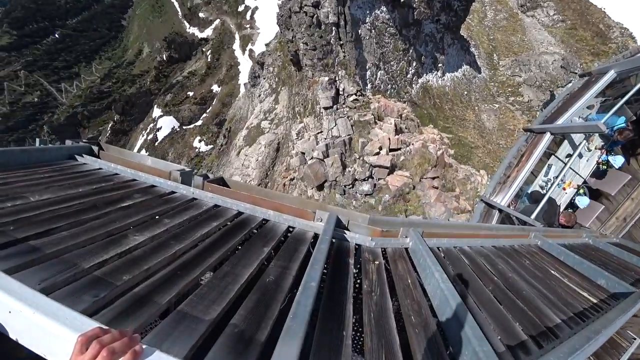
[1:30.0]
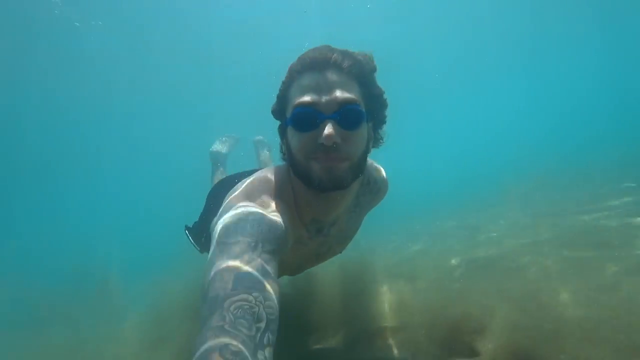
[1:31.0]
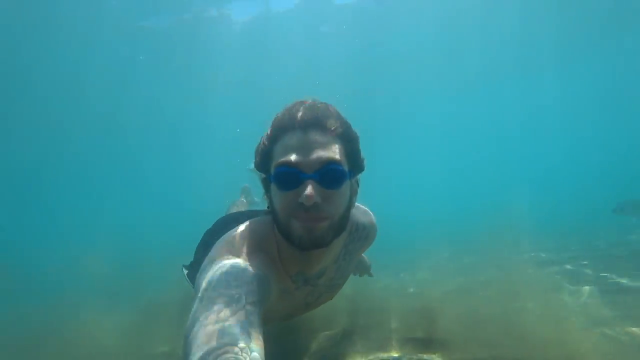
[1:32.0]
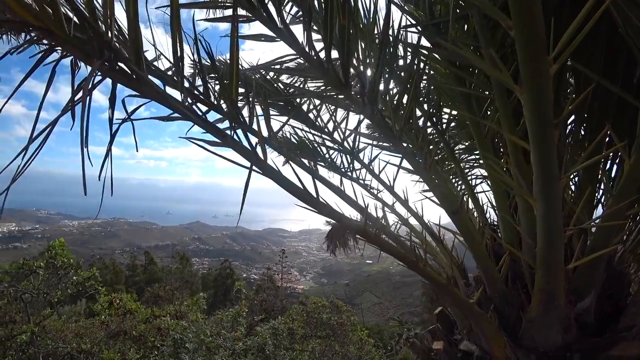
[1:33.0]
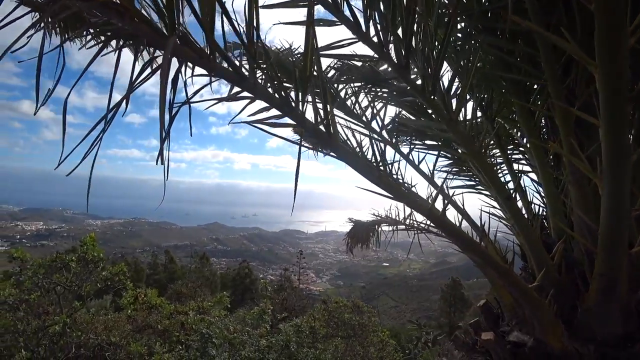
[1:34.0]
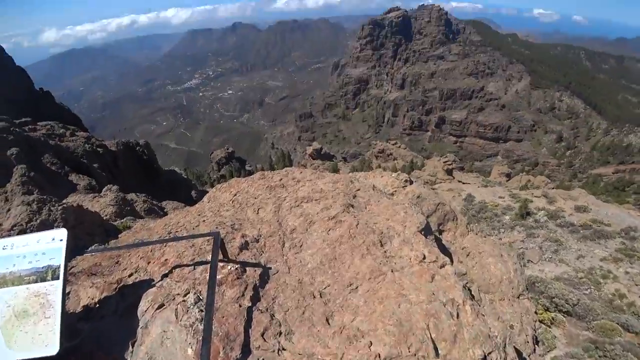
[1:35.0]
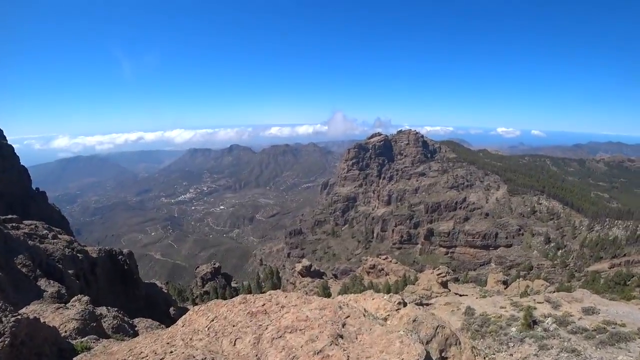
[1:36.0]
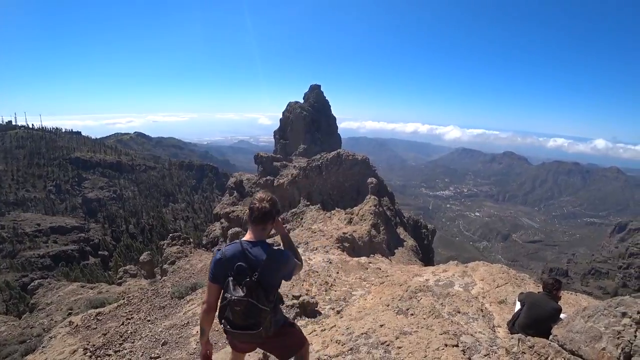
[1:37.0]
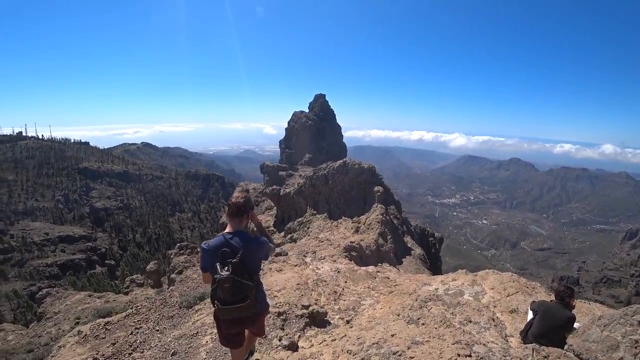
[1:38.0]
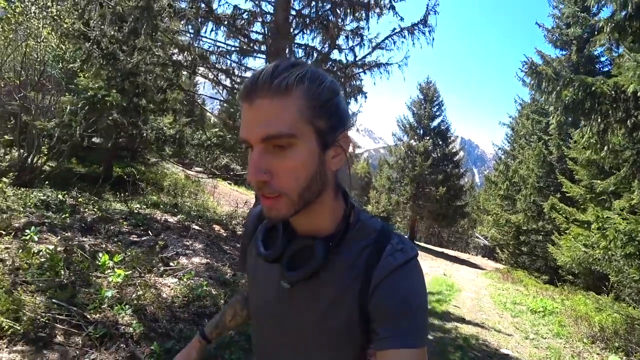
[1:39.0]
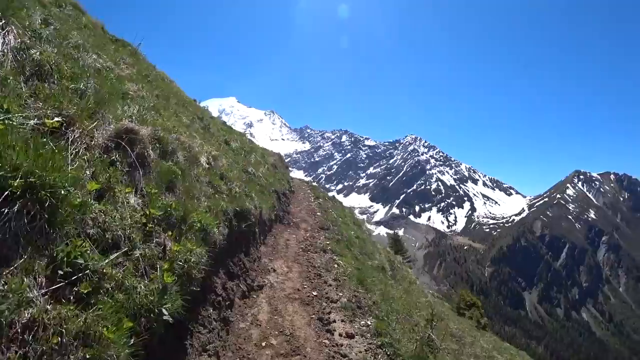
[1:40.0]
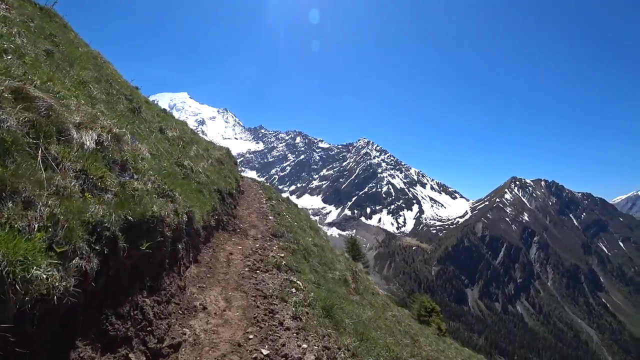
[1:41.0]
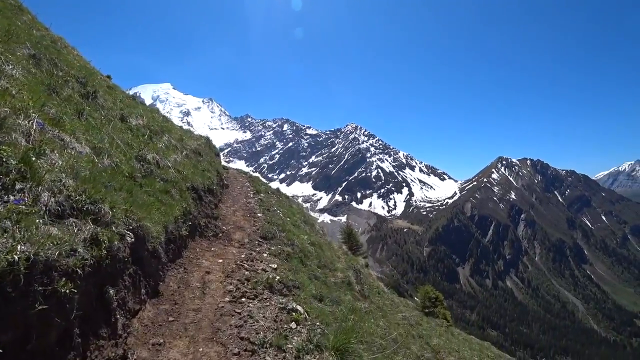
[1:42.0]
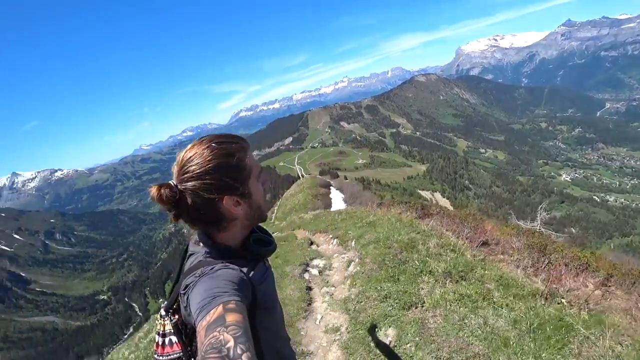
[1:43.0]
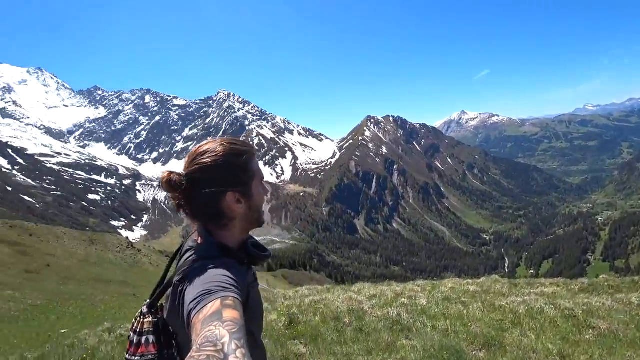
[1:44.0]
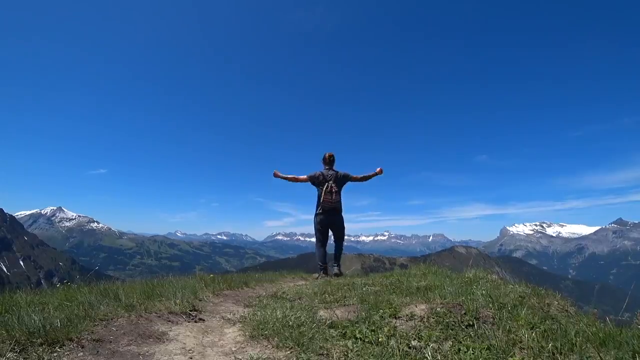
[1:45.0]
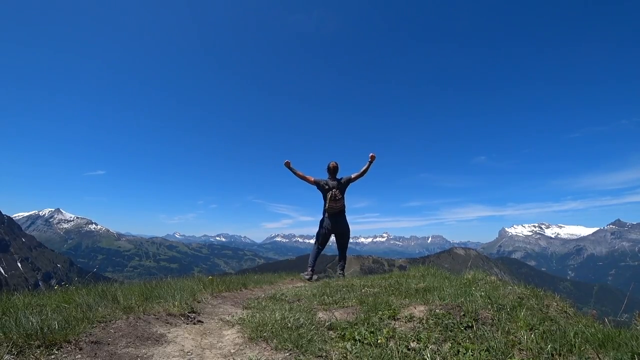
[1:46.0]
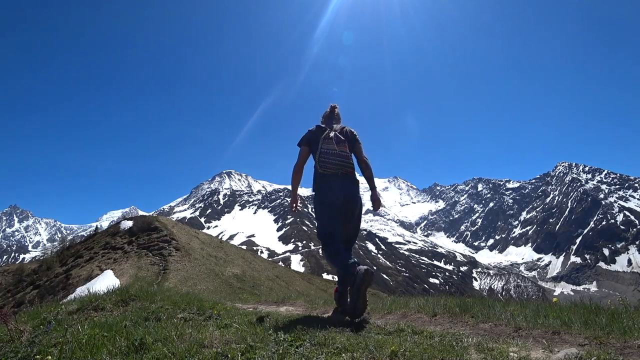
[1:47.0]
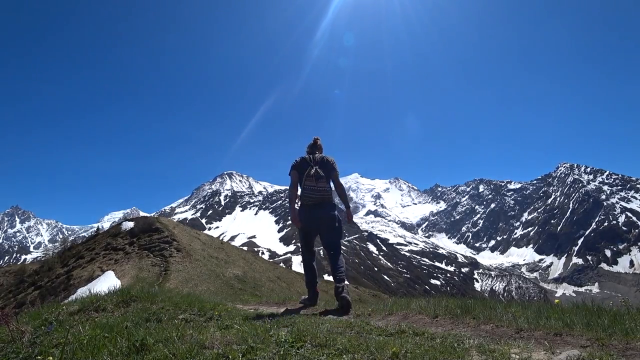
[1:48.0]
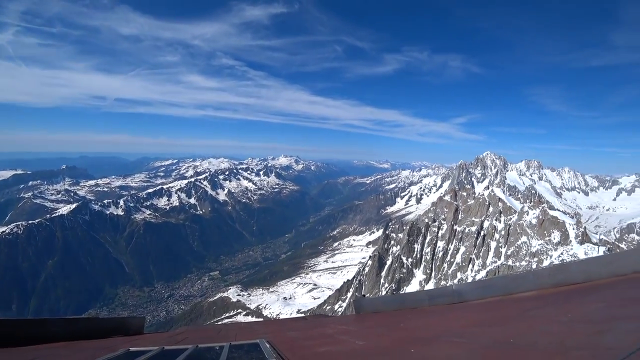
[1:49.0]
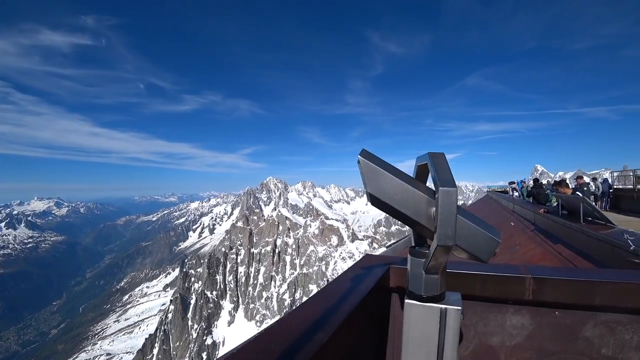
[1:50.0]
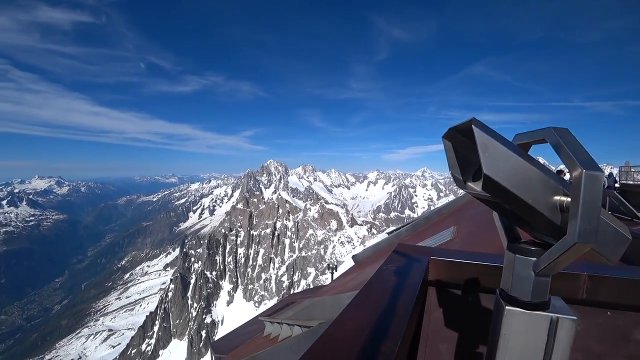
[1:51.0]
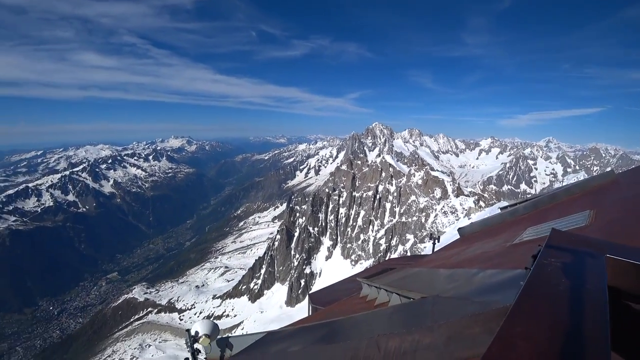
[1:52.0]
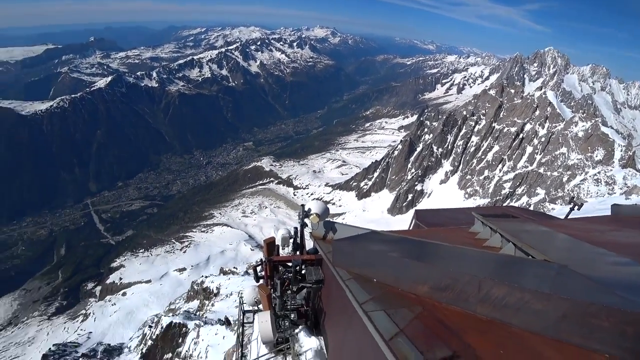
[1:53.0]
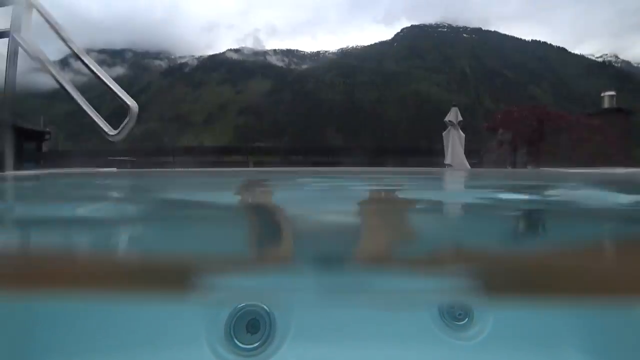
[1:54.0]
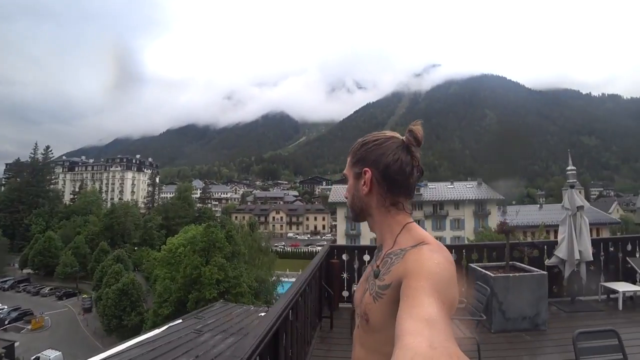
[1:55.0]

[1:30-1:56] Rocks are visible down below. A man wearing black goggles and black shorts swims underwater, with blue water all around him. Hilly terrain is in the background with a palm tree in the foreground, under a blue sky with white clouds. Another view shows rocky mountainous terrain, the rocks covered with dense dark green vegetation, and a blue sky on the horizon. A person in a black T-shirt, her hair pulled into a bun behind her head, walks ahead towards the peak of one of the cliffs. A man is seen from the side as he walks in the wilderness, followed by the view ahead as he walks forward, looking at the side of the mountain. The man appears again, his hair pulled up in a bun behind his head; he is filming himself as he walks, though the camera is not visible. Ice-covered mountain peaks are in the background. Seen from the back, the man stands up and puts both hands up in the air, clenched into fists, looking dramatic, his silhouette against the expanse of blue sky on the horizon and the land he is standing on. He continues to walk, viewed from the land. More snow-covered mountains appear, then someone's feet in a pool. Finally the man stands on a balcony, overlooking the view of houses around.